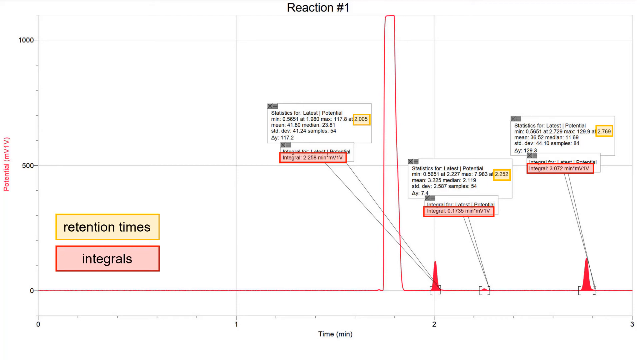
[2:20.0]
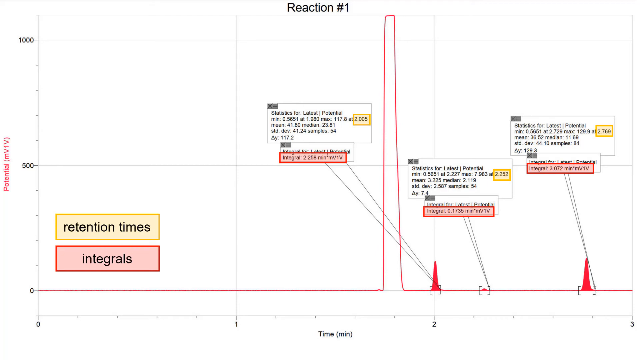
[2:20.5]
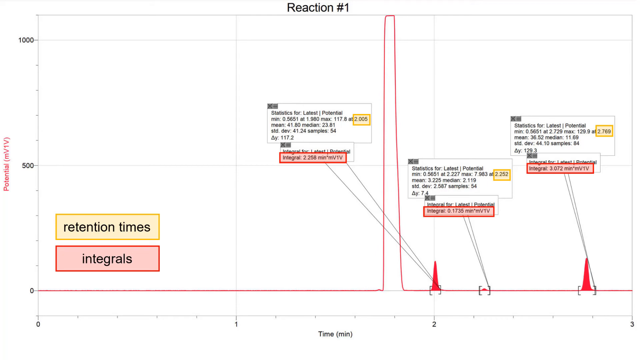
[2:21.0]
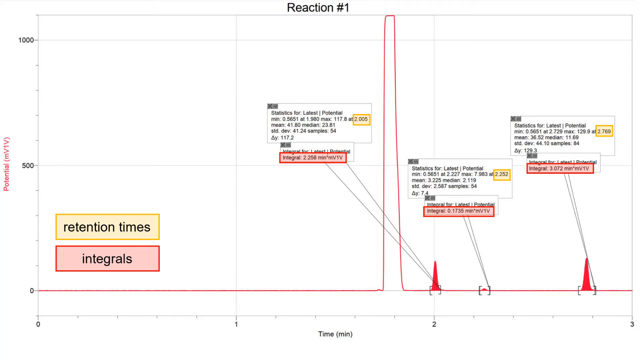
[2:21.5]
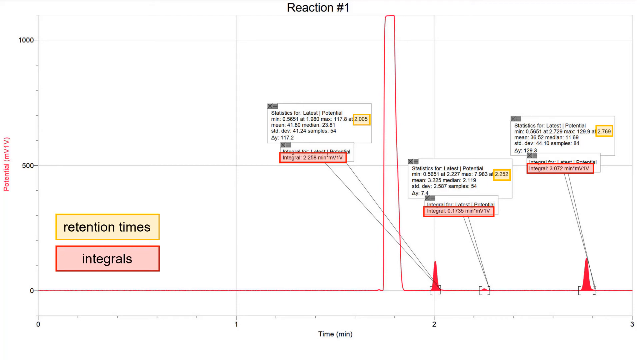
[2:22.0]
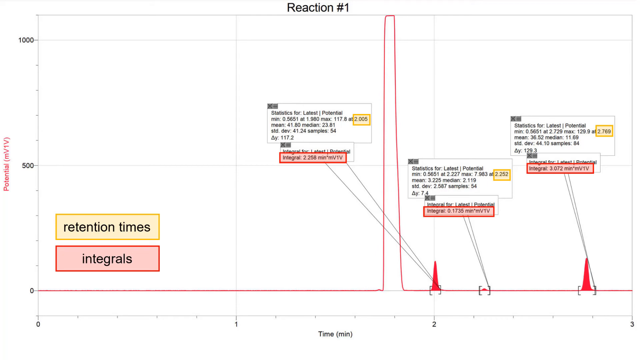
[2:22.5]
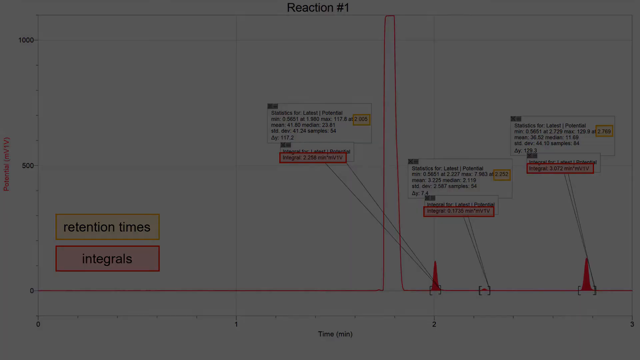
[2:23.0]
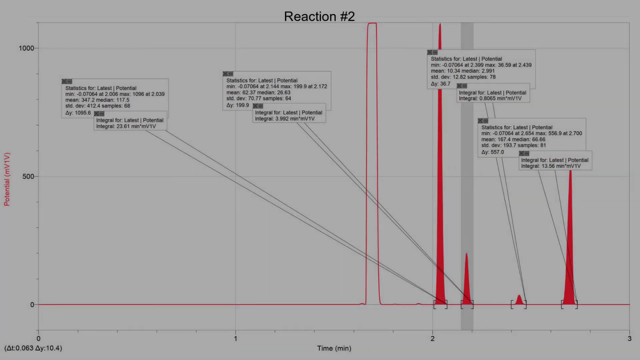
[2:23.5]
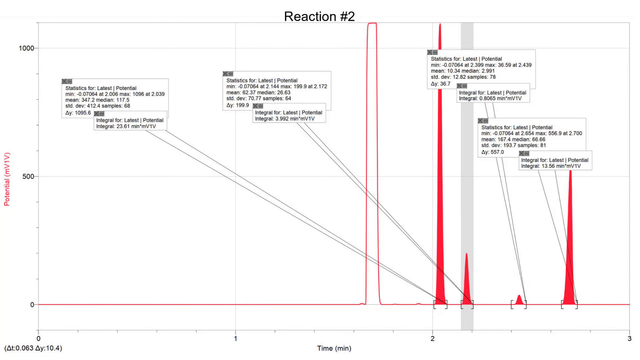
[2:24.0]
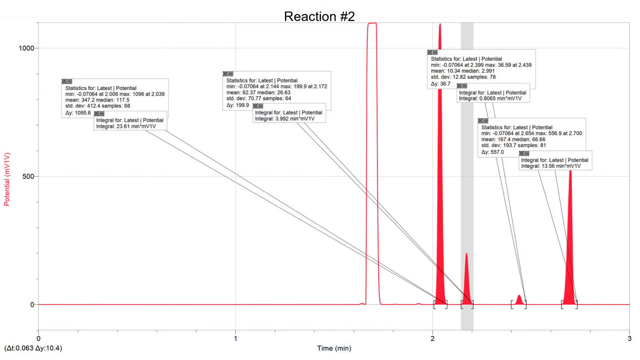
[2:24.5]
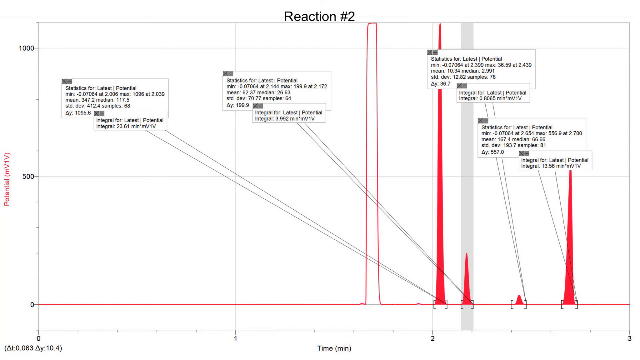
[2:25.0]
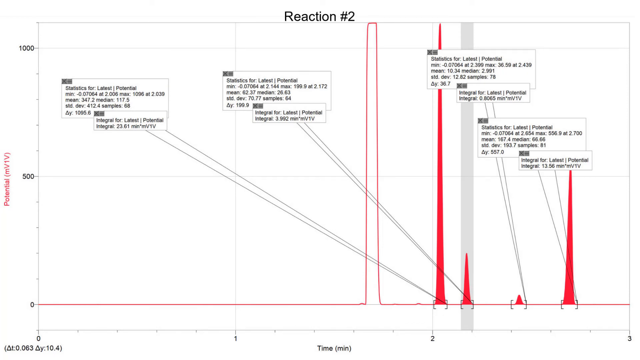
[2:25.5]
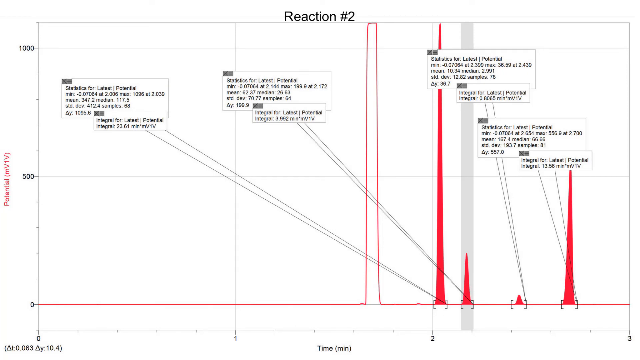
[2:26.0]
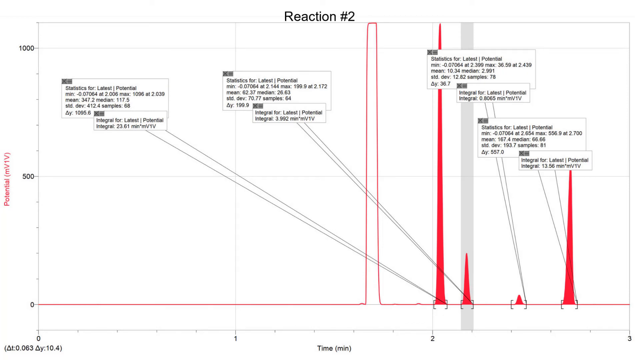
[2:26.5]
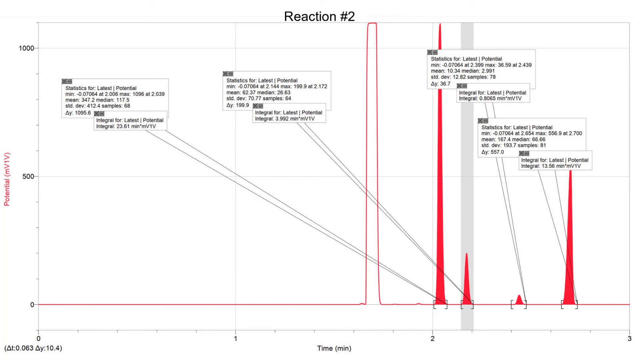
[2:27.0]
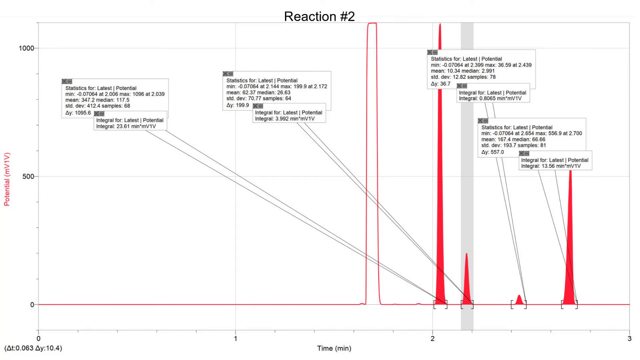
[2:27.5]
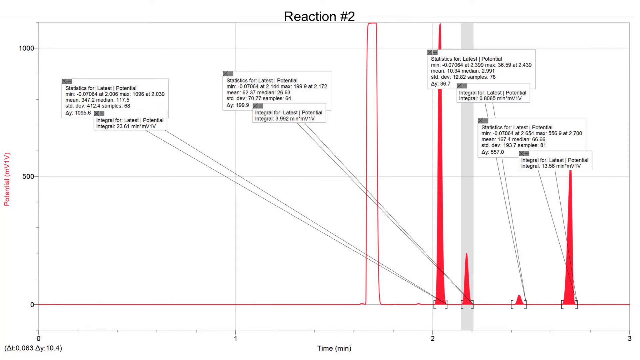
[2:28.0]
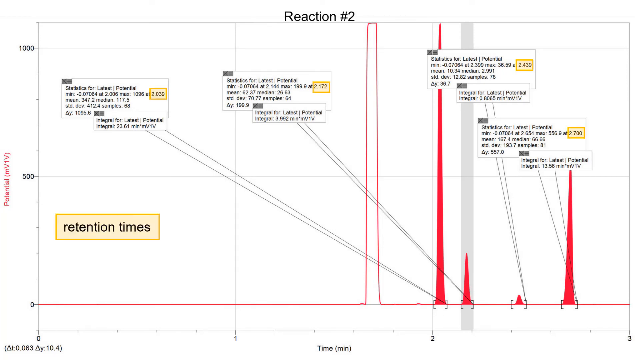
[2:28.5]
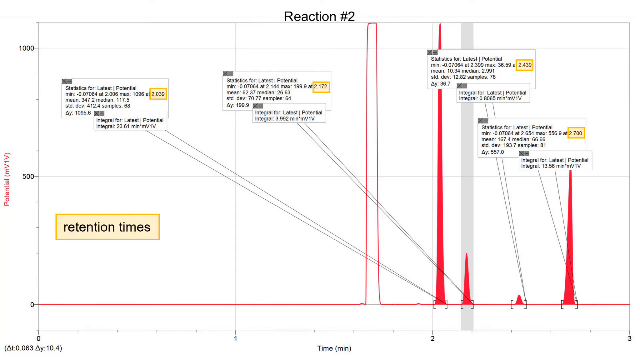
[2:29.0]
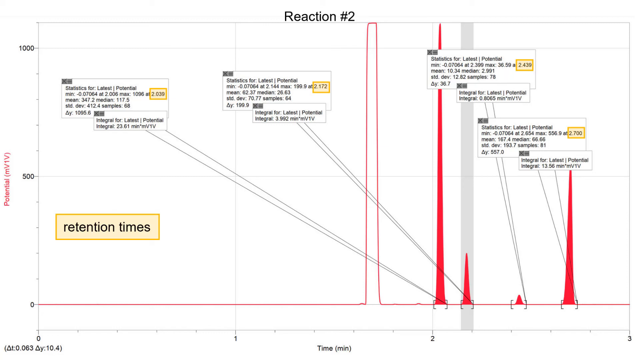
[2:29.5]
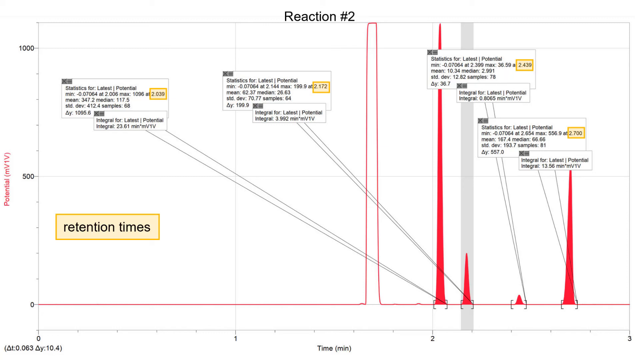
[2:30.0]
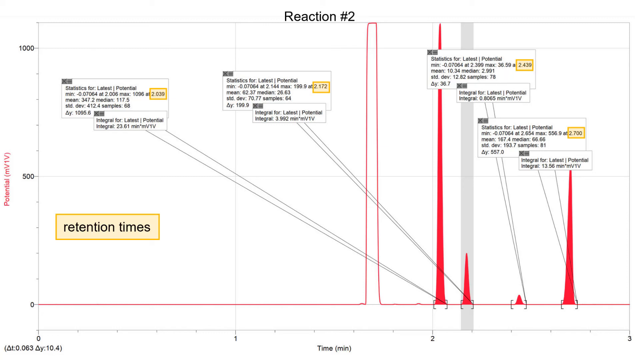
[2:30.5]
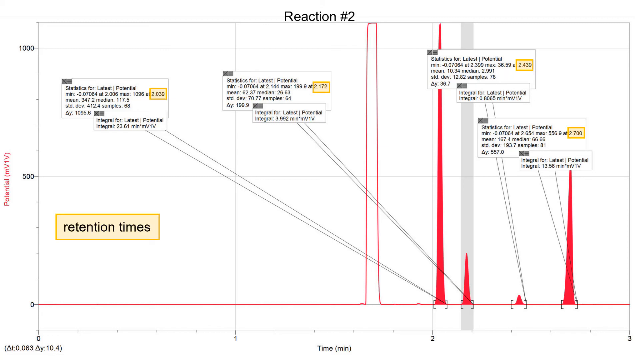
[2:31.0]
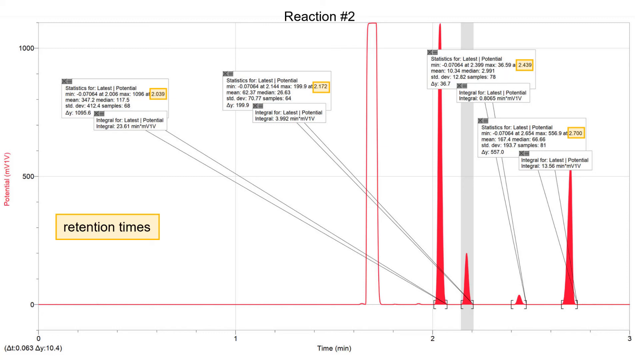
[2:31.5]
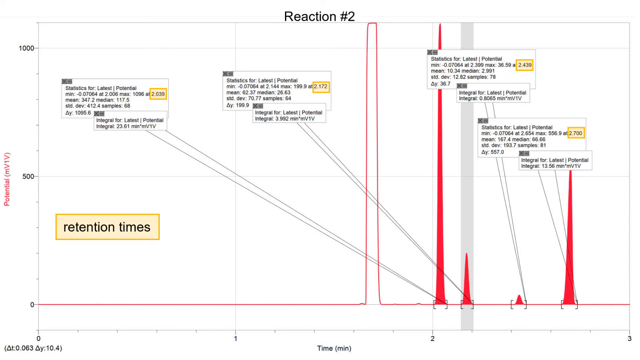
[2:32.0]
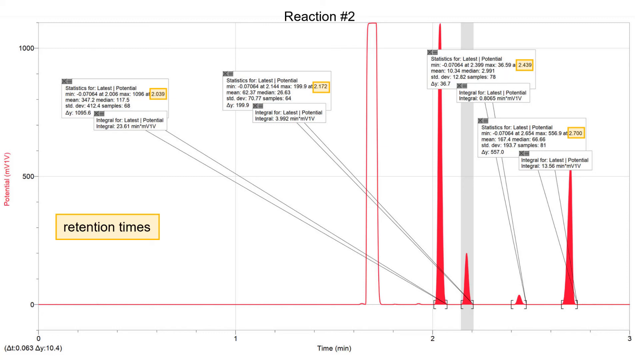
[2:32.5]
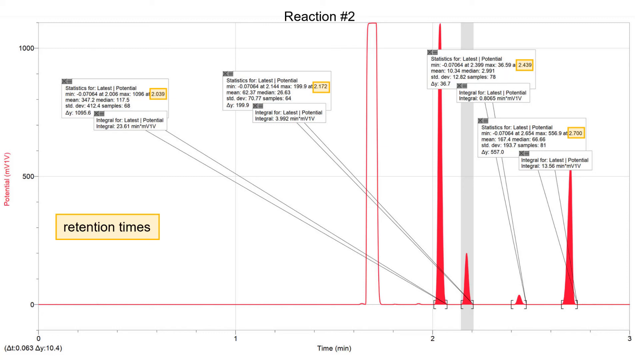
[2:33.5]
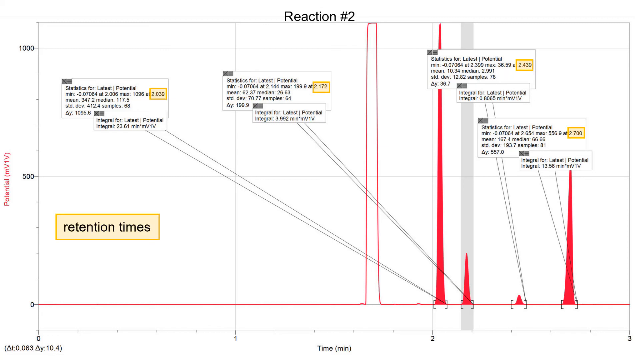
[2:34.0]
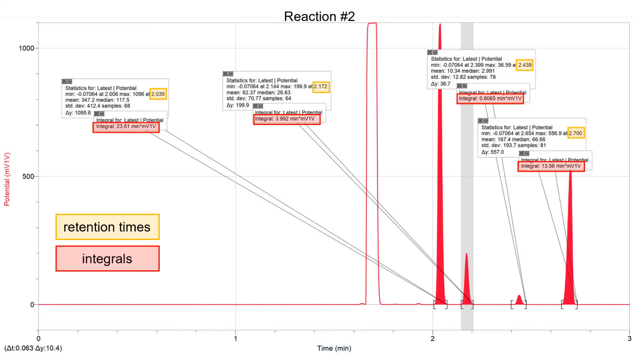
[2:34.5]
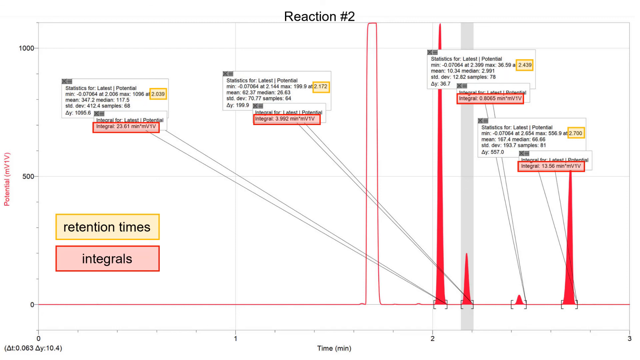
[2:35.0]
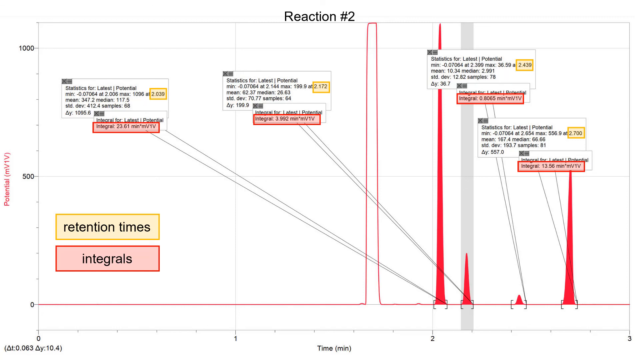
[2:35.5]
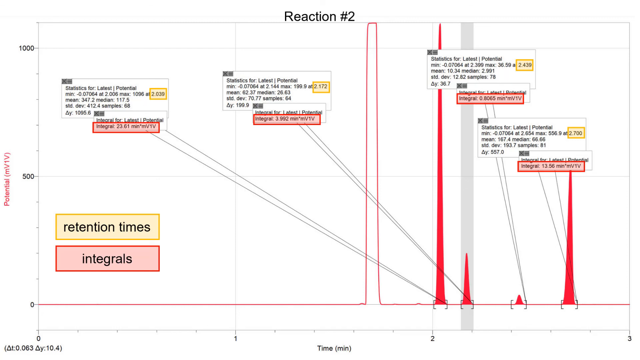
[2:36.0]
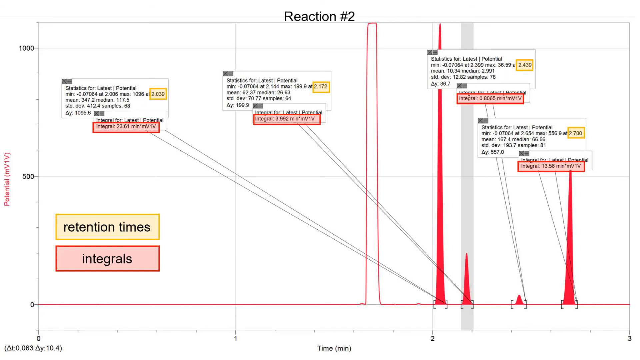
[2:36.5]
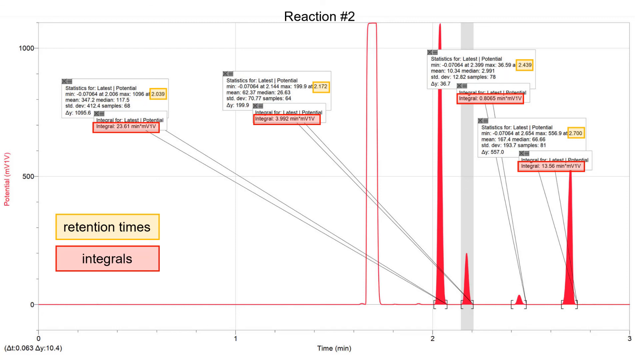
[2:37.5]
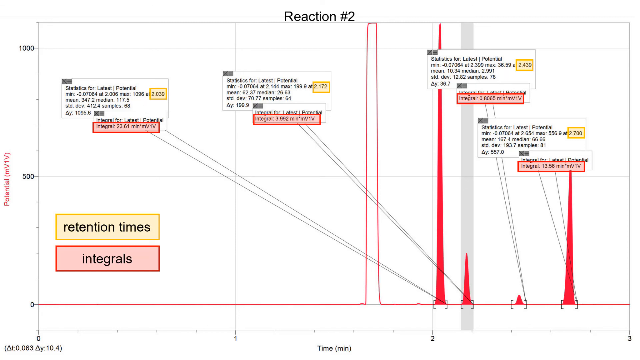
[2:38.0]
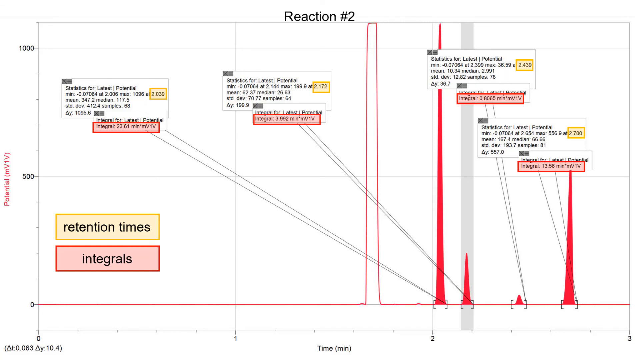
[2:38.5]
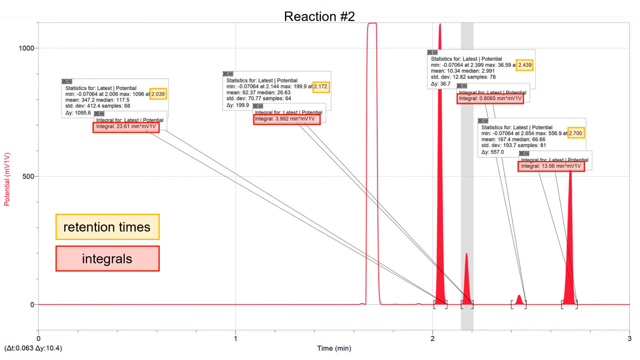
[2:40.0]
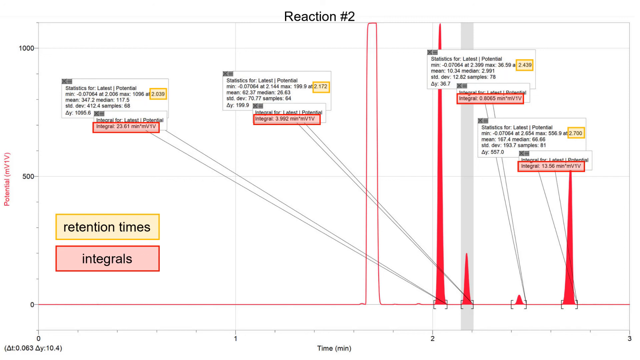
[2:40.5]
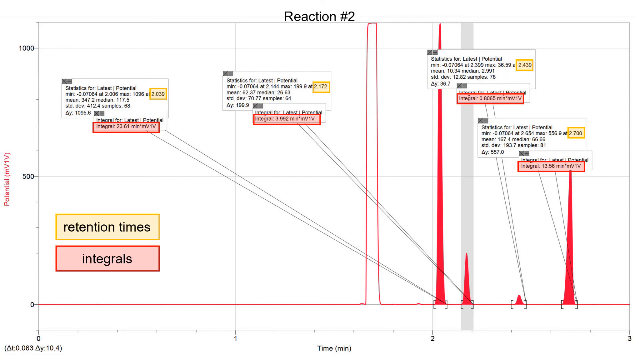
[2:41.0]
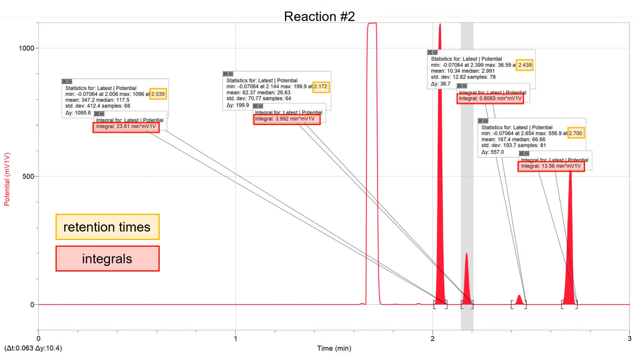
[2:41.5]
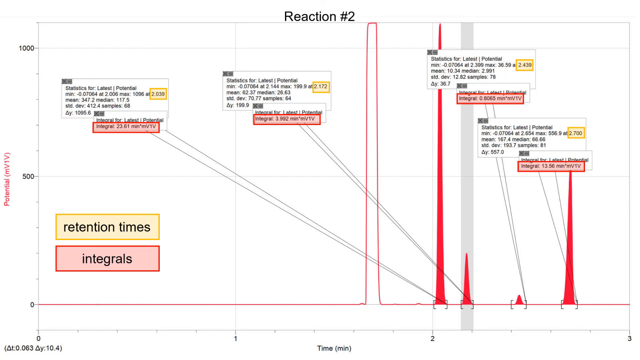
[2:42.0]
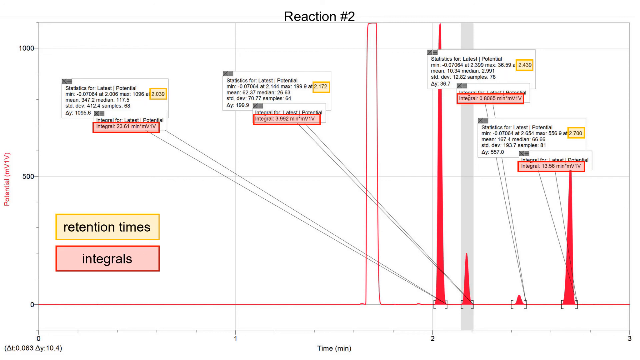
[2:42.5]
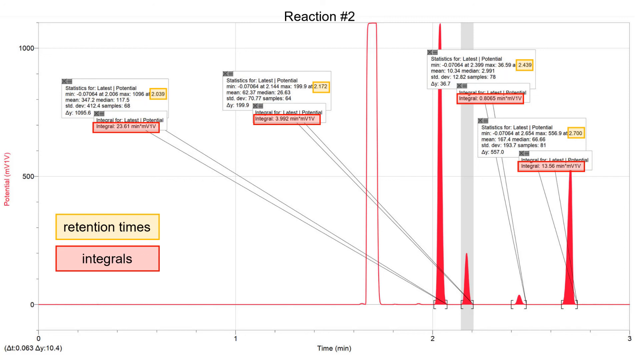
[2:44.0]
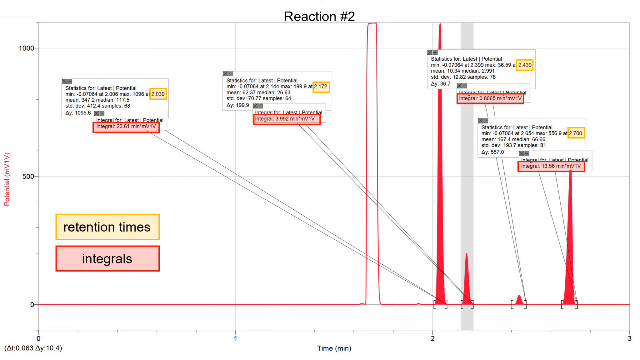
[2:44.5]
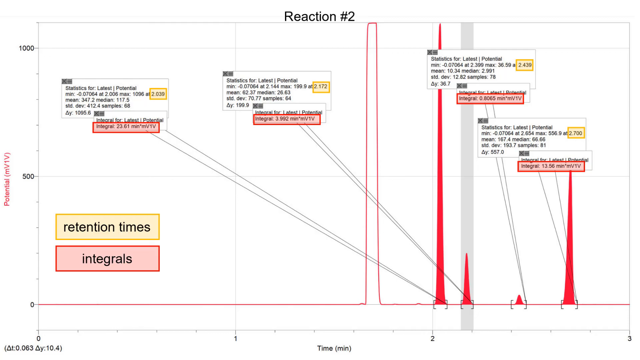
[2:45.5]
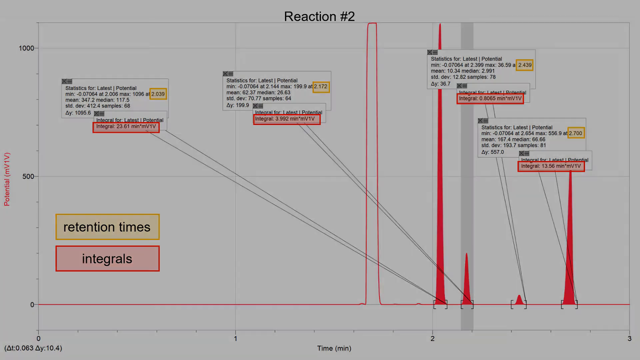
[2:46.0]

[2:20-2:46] The screen shows results labeled "retention times" and "#2". Only the results are visible, with no machine, laptop, or person in the shot.